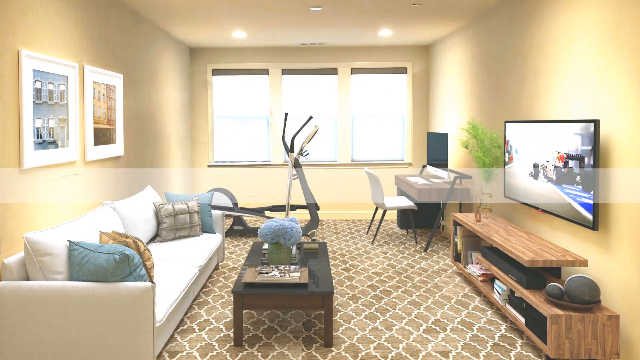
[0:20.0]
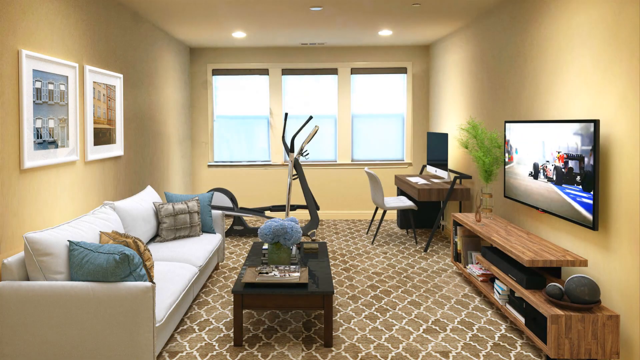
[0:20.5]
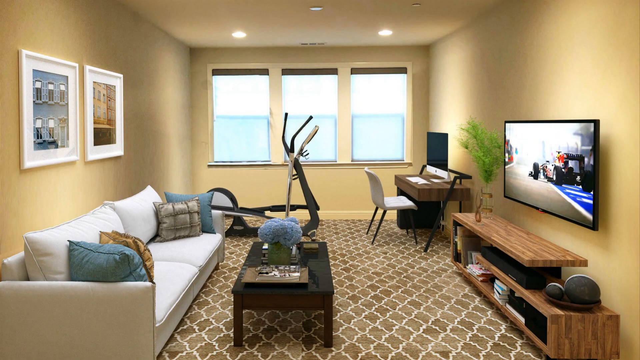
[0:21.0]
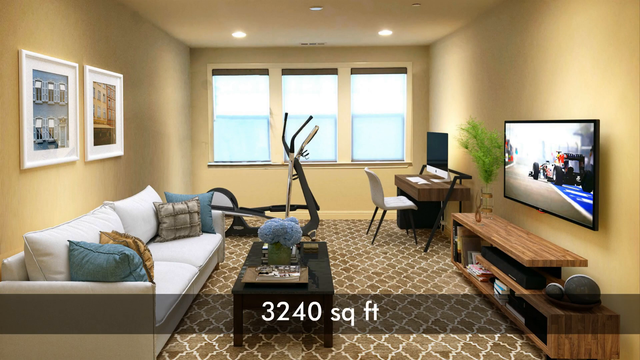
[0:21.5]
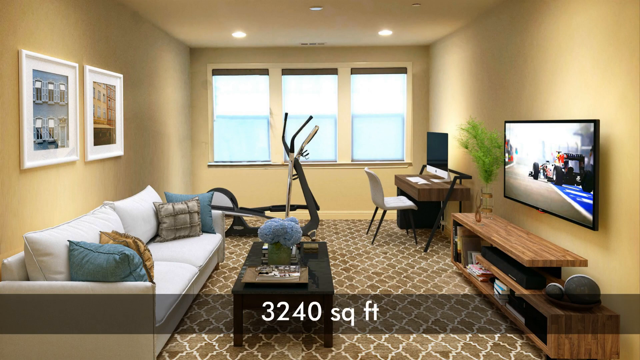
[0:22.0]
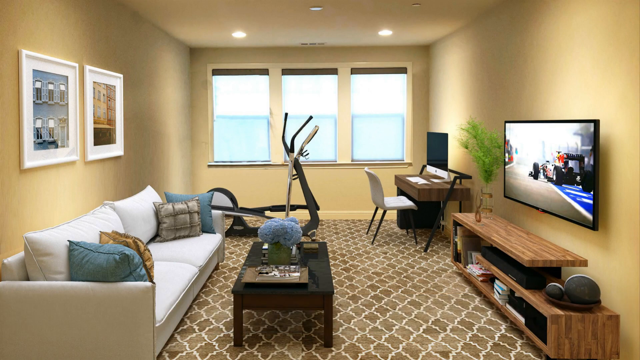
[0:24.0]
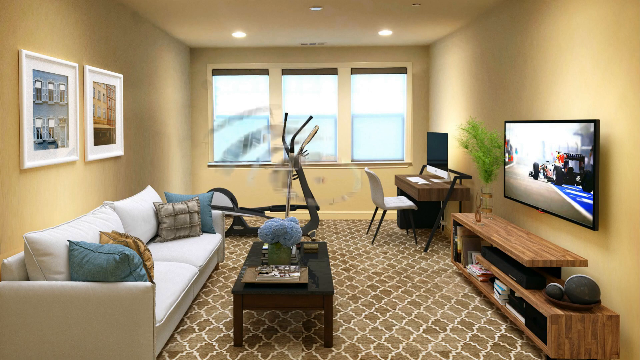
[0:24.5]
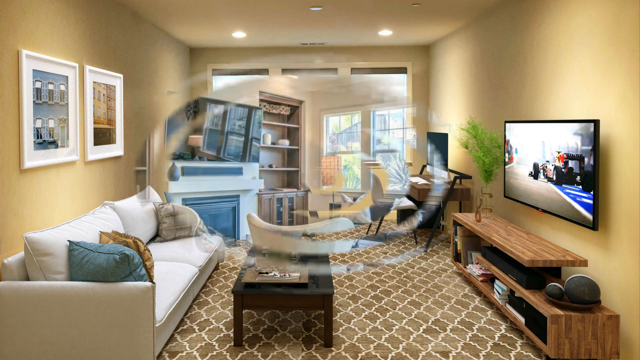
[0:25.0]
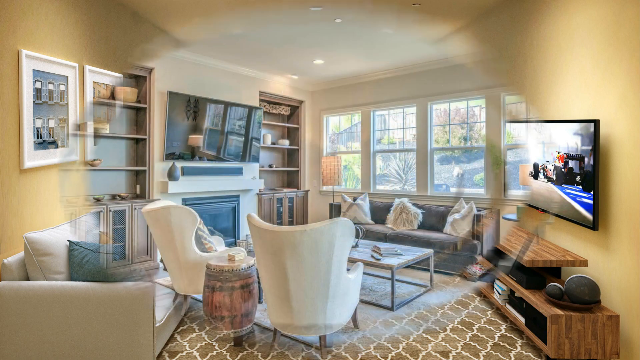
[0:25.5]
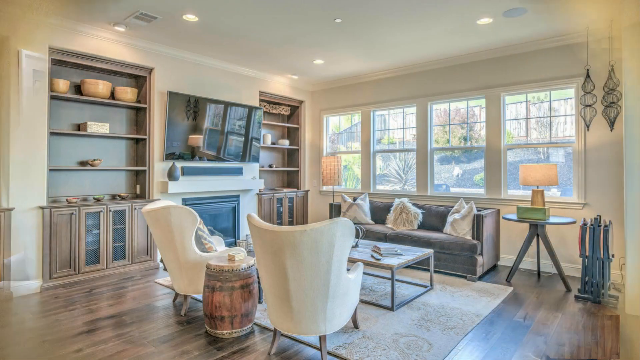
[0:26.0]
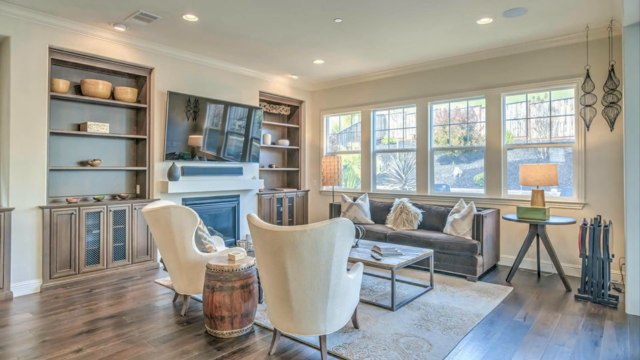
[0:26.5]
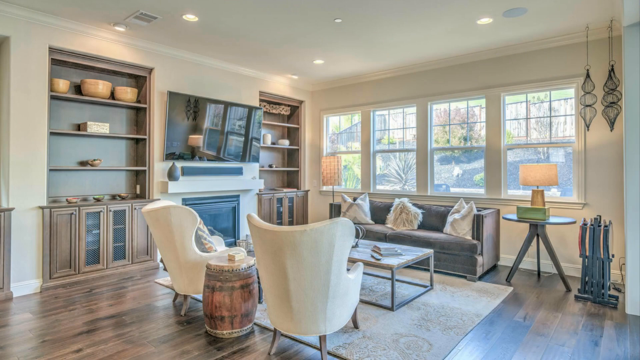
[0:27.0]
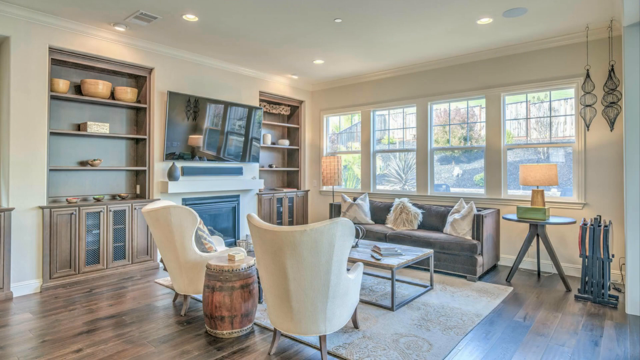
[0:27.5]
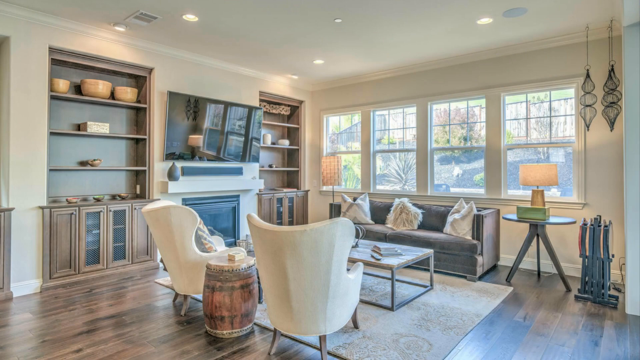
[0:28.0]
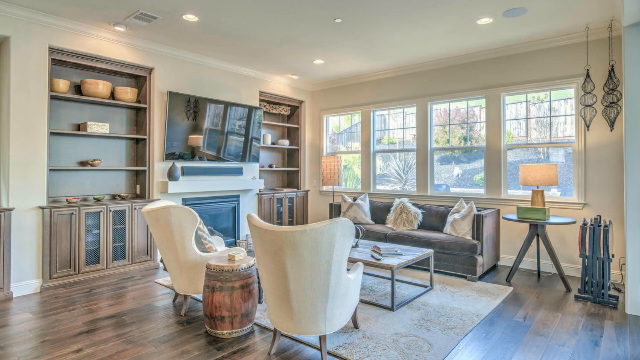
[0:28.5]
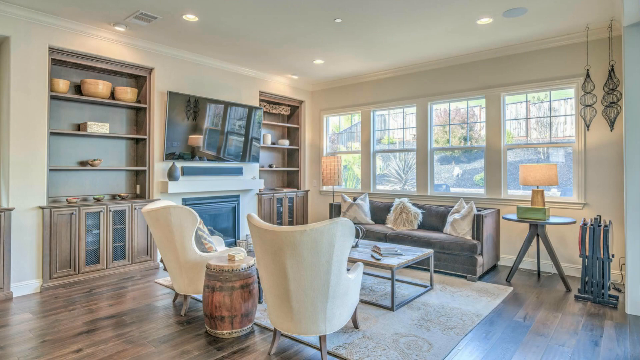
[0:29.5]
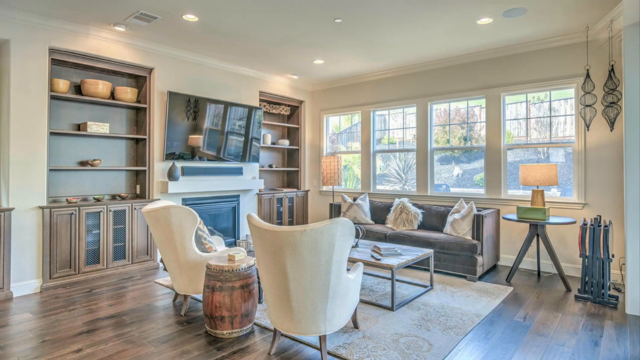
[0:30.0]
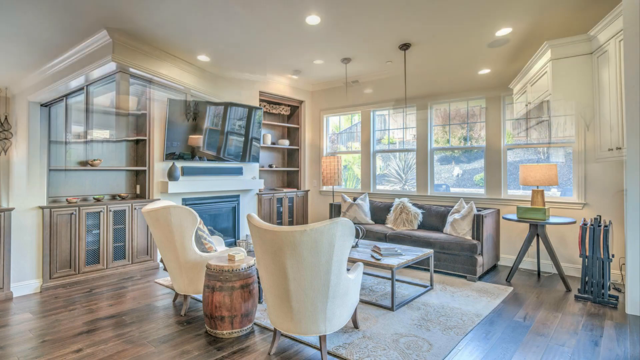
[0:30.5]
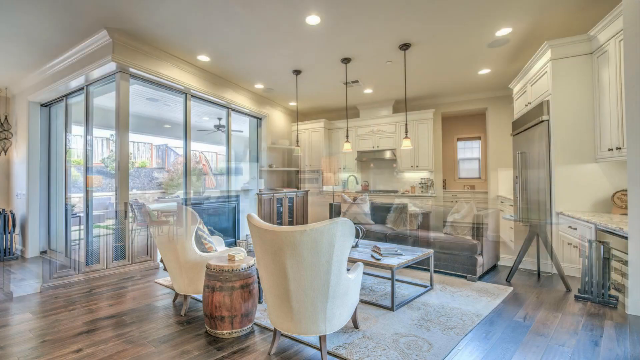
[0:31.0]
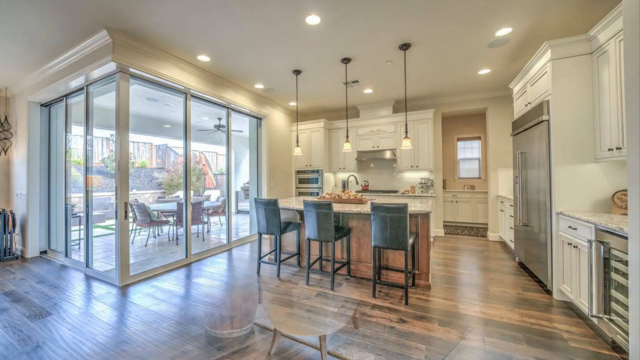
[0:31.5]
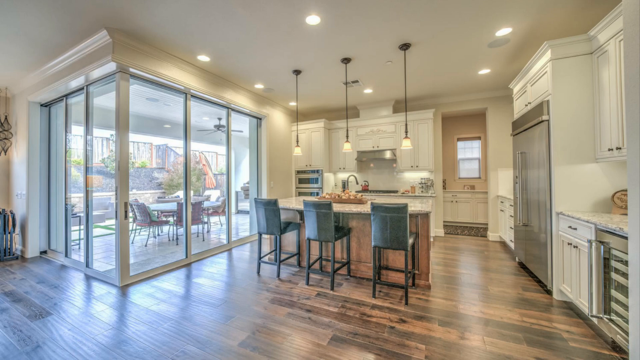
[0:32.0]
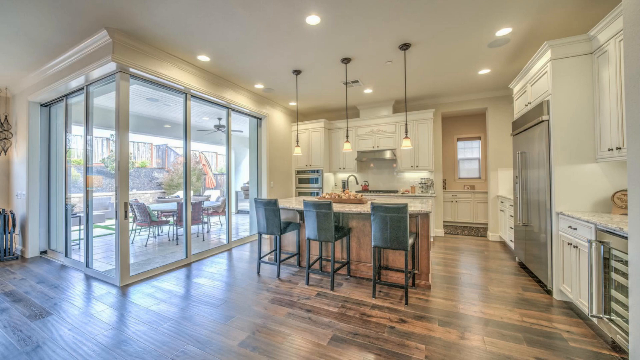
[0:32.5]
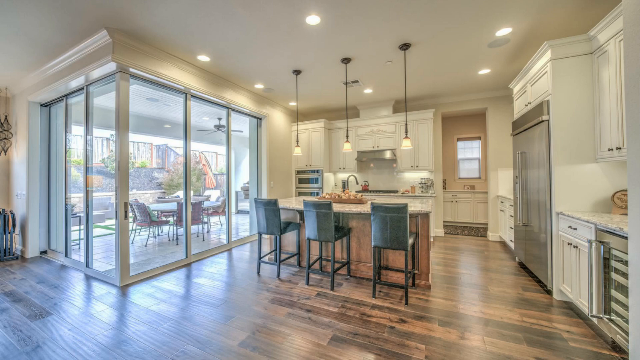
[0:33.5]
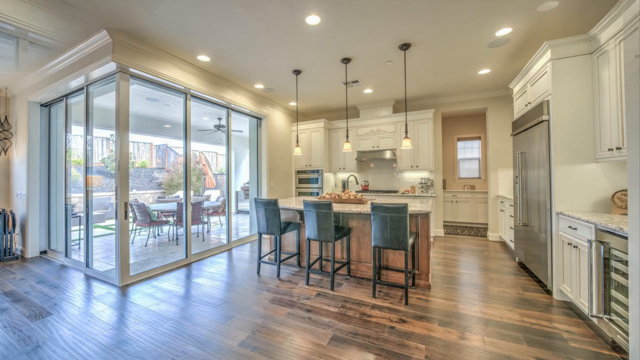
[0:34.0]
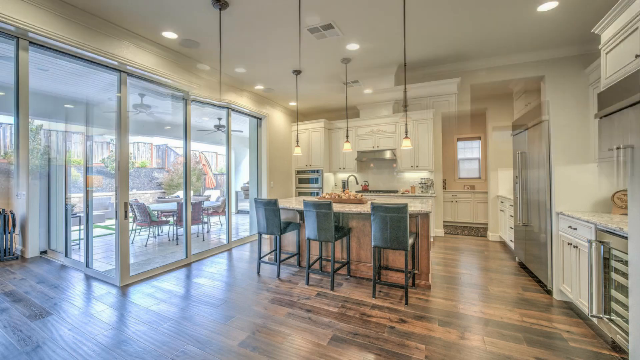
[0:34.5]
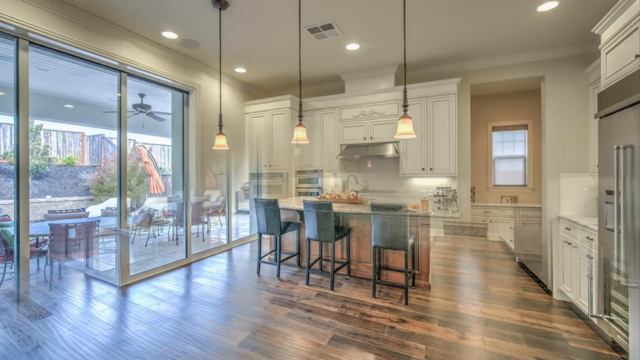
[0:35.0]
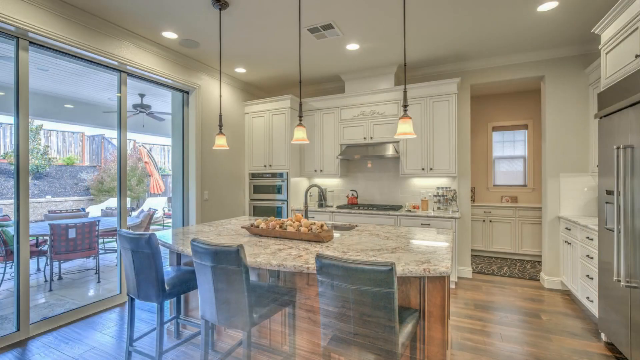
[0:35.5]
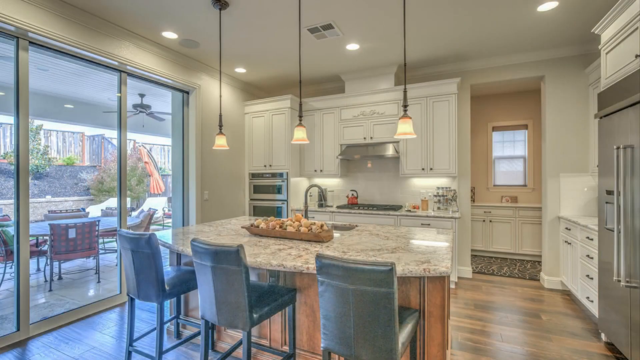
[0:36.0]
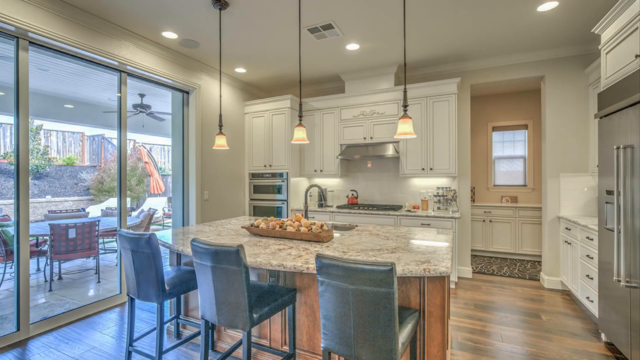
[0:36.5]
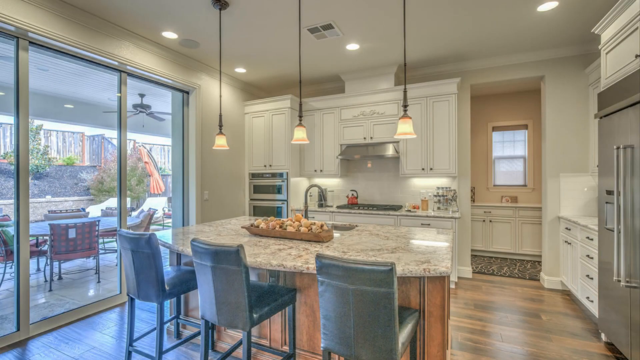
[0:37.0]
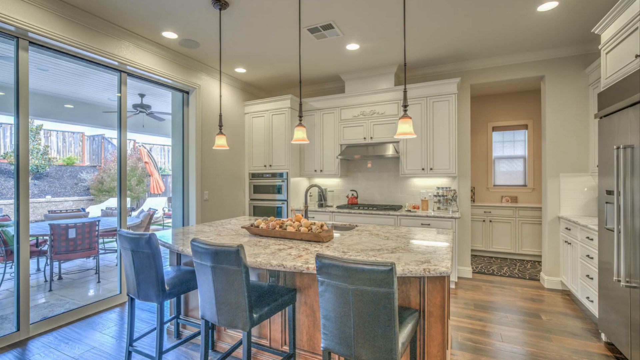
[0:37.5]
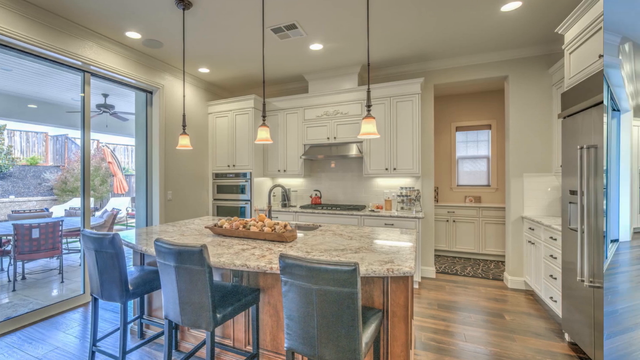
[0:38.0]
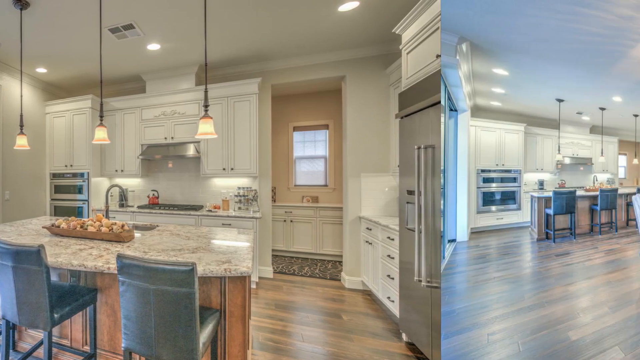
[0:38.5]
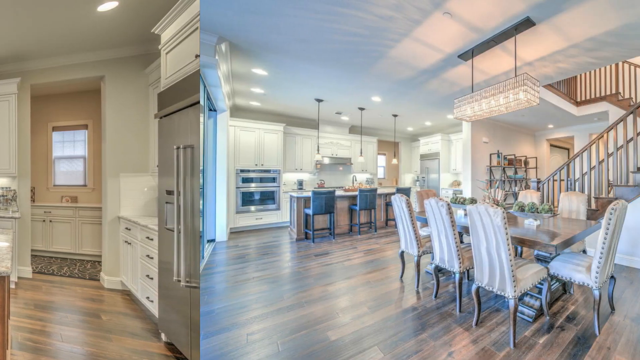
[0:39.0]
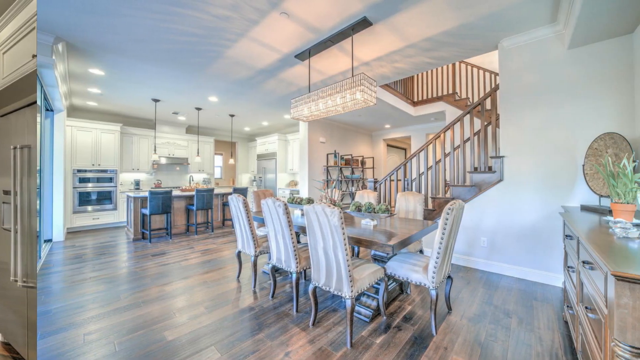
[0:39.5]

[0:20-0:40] The video shows the interior of the house, focusing on the sitting room, or living room. In it are a television, a room divider, a chair, a table and a running treadmill.